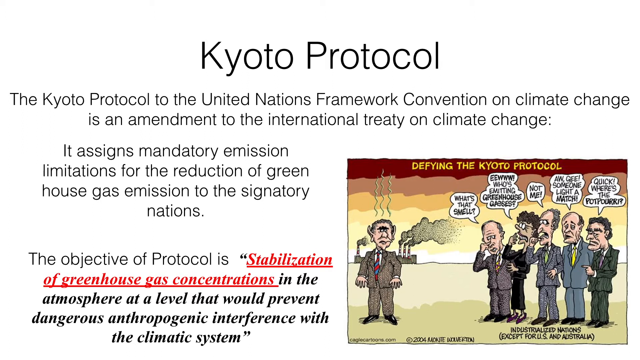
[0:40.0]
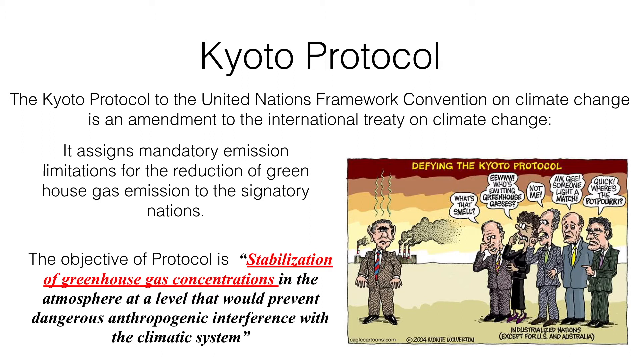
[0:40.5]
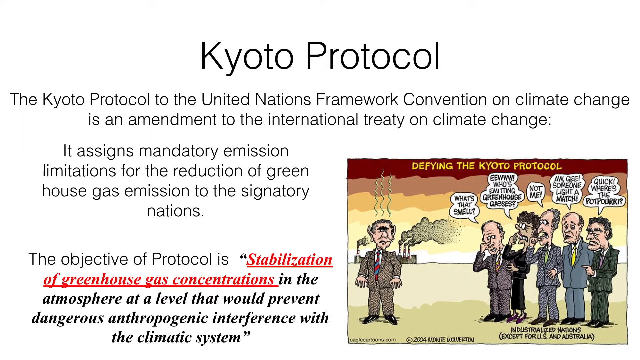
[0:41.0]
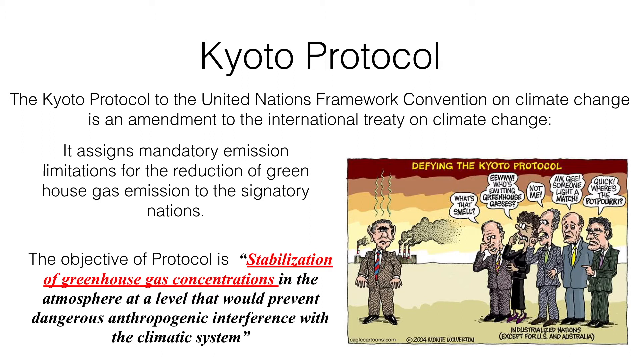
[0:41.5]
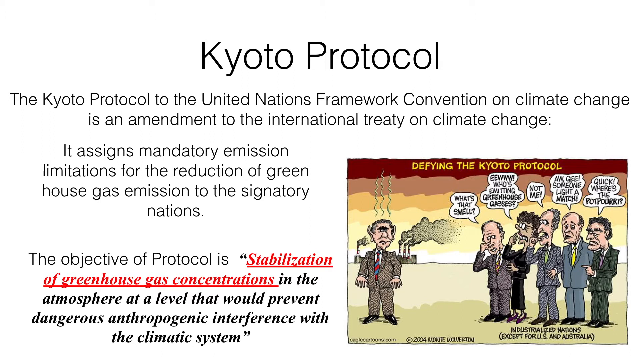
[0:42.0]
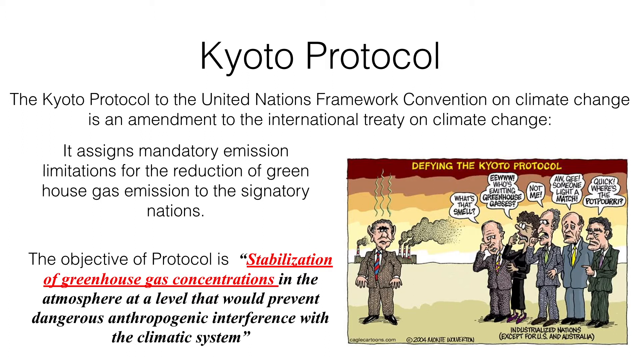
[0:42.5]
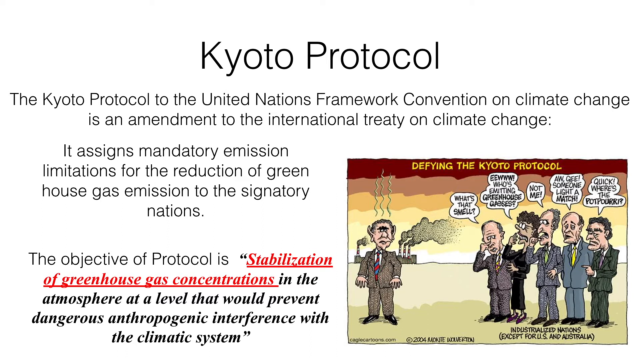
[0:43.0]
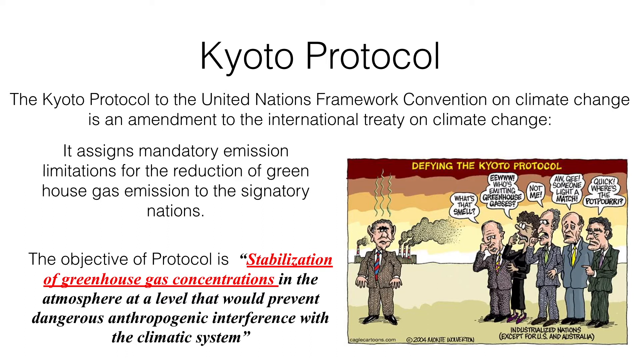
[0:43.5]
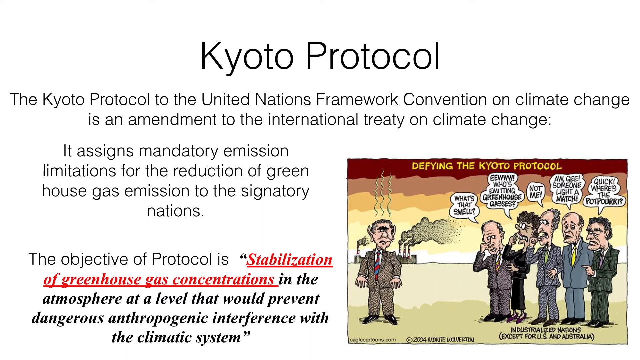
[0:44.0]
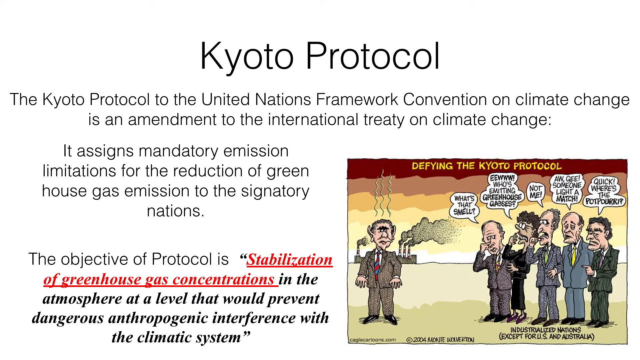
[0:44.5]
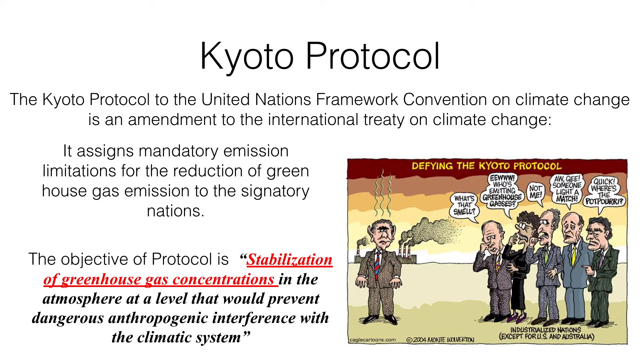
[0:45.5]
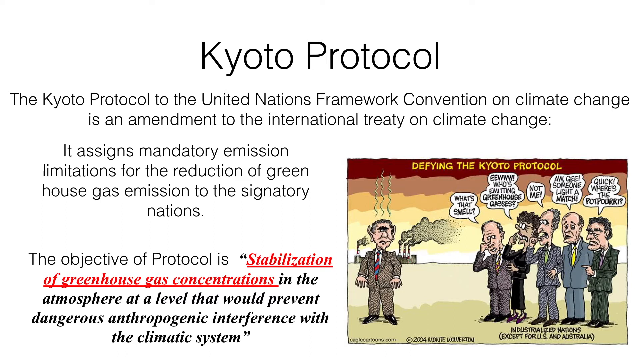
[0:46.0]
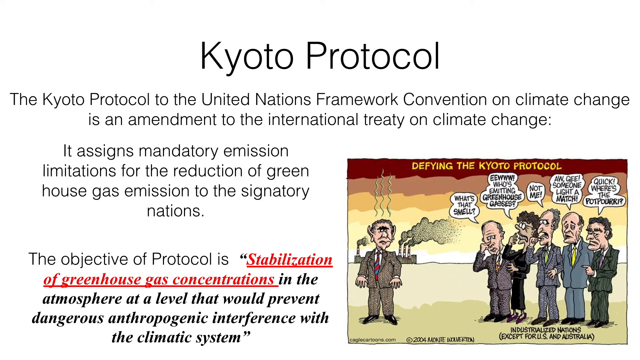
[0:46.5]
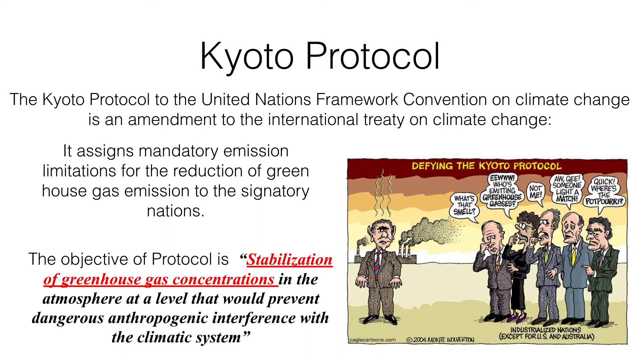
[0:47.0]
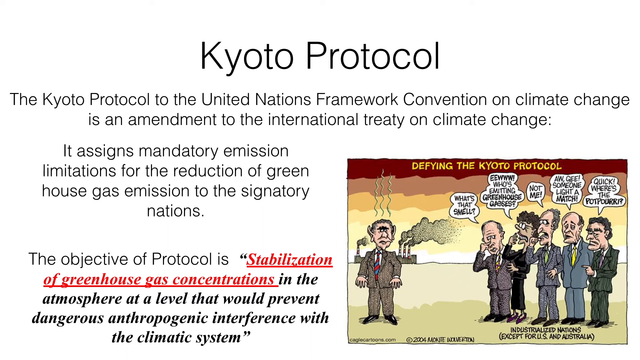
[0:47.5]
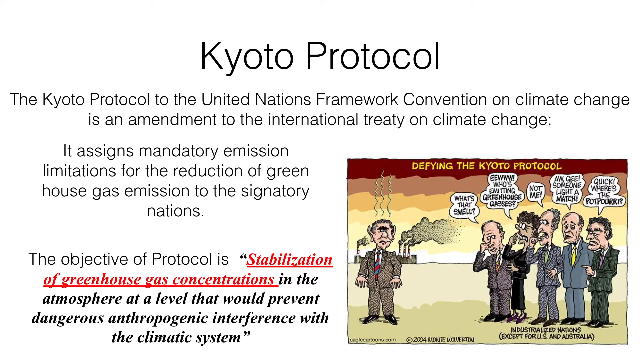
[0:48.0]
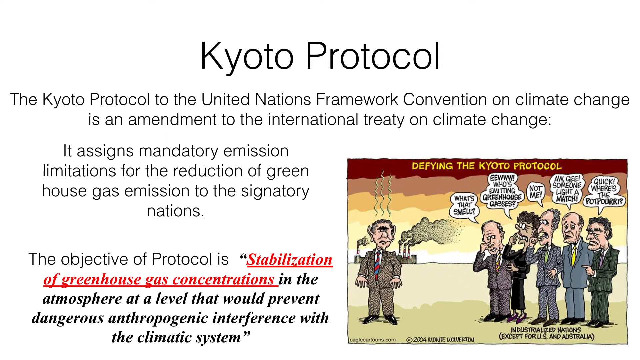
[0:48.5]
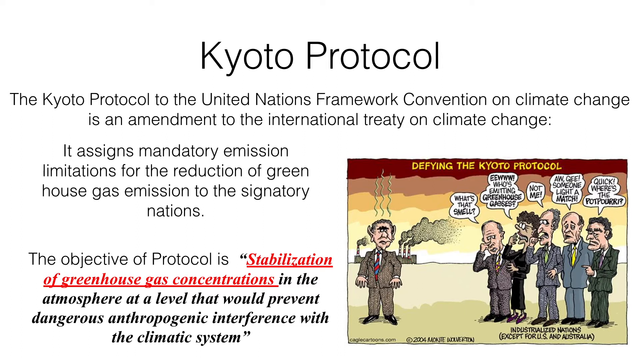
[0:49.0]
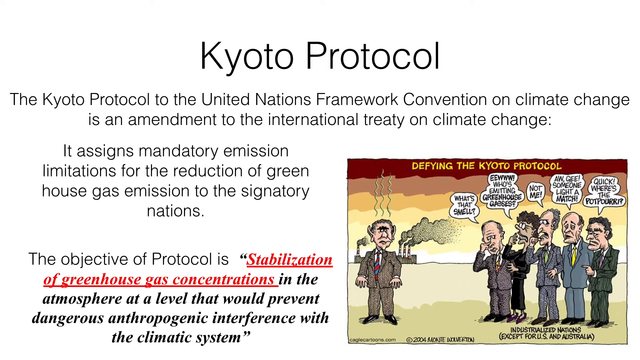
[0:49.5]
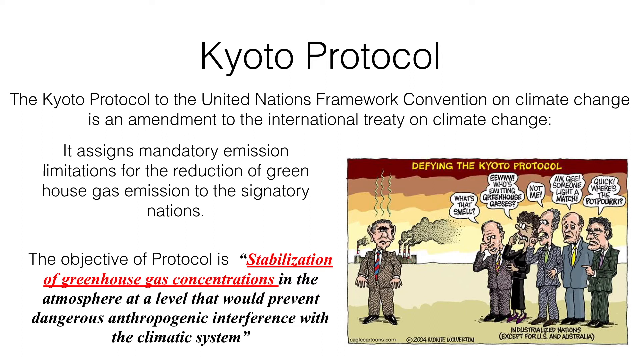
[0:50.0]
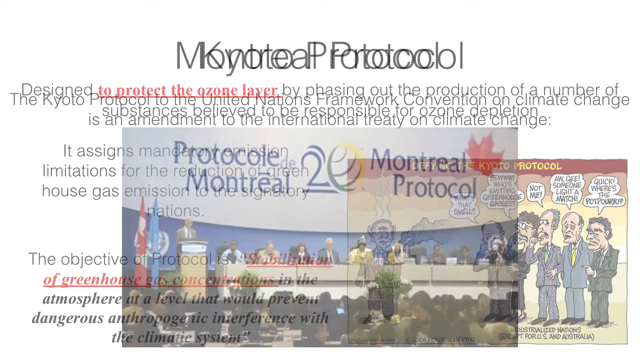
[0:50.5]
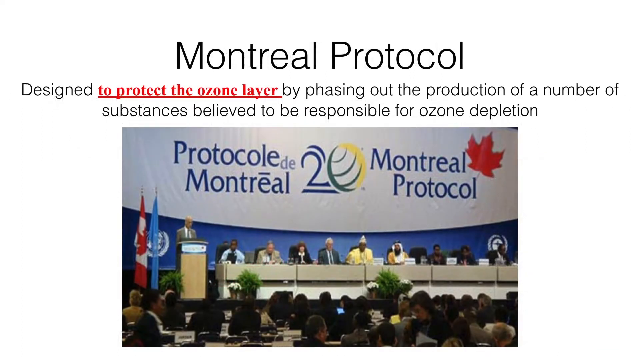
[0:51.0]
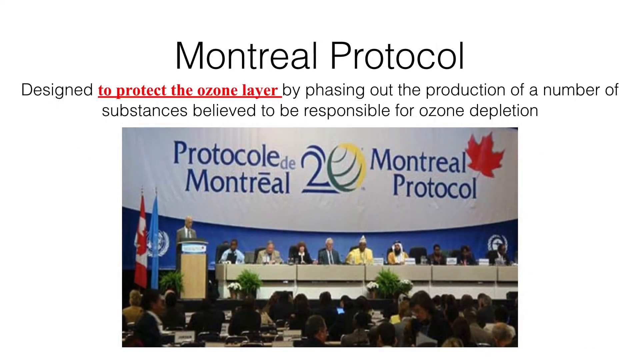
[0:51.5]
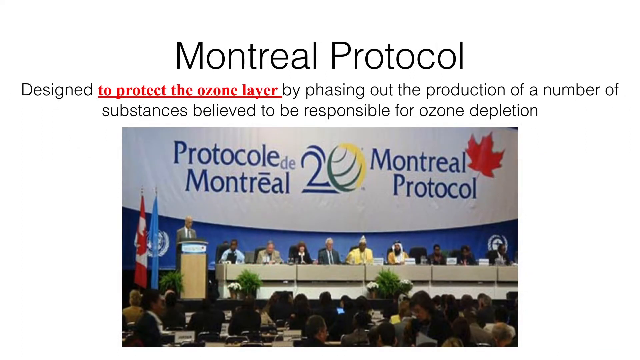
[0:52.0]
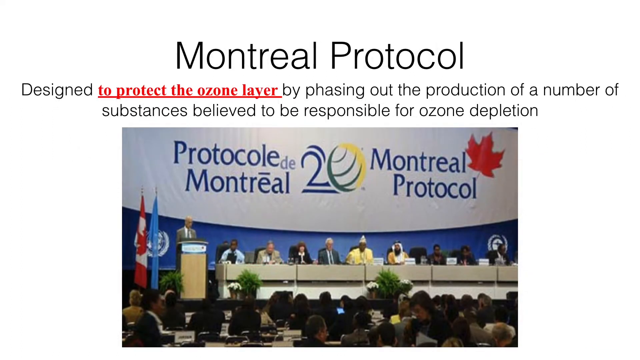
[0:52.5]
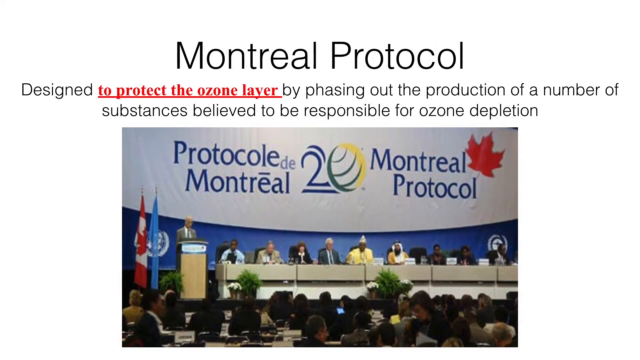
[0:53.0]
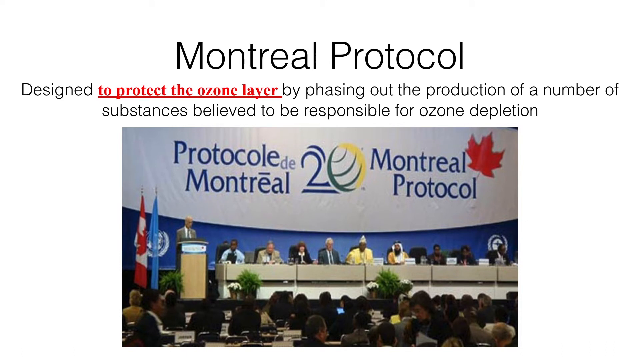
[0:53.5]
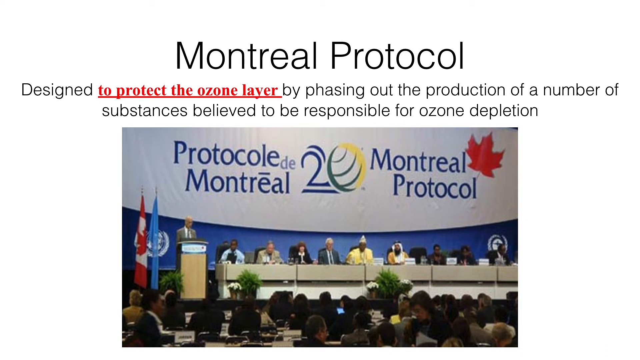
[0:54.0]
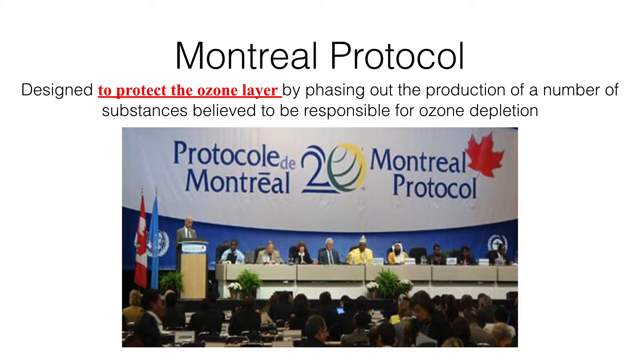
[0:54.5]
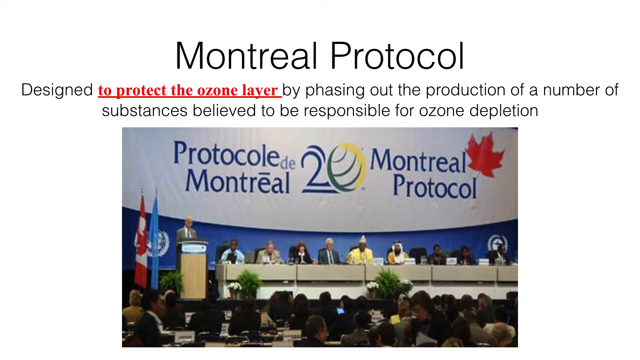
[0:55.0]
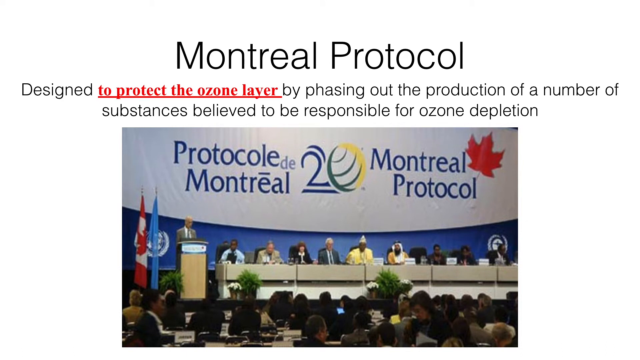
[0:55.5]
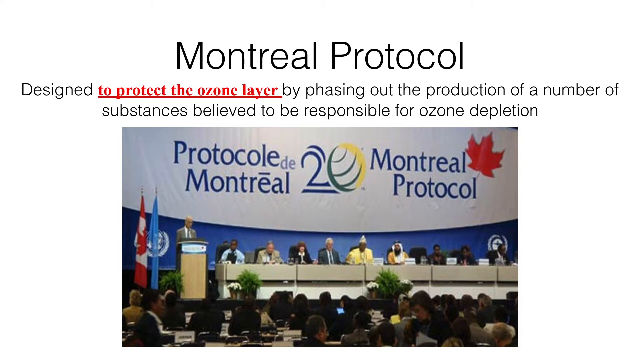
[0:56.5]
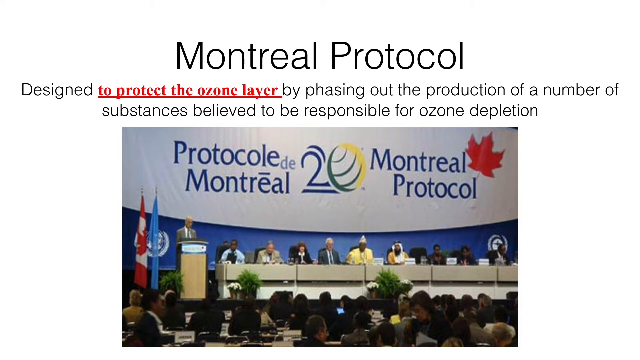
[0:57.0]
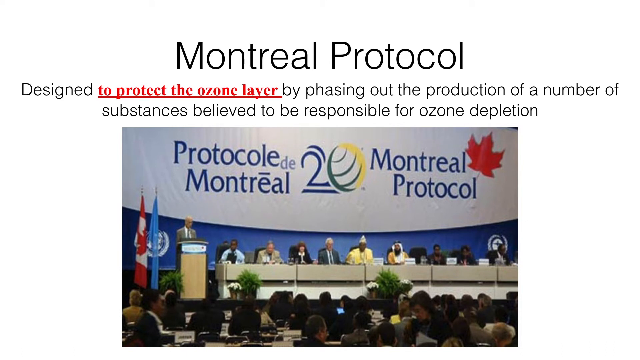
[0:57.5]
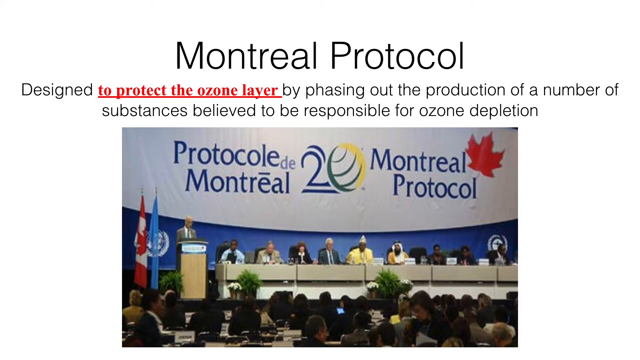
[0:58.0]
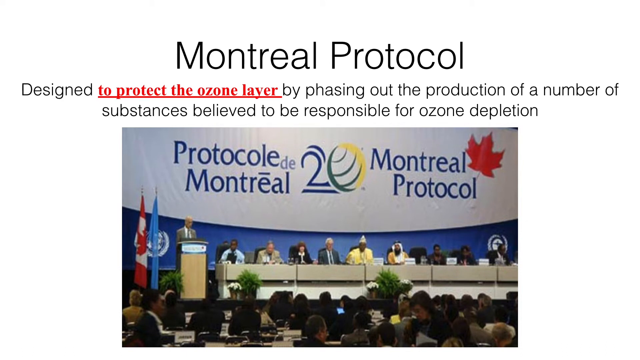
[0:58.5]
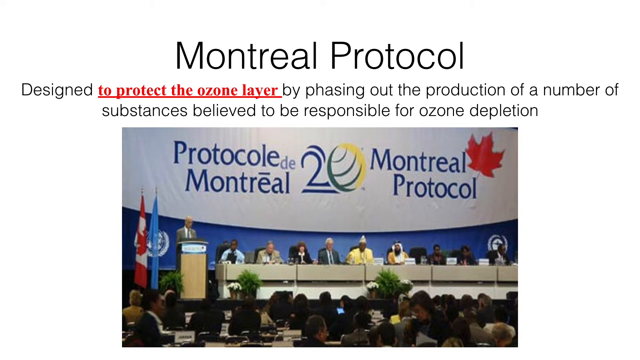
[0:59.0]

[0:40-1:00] A series of what look like pages from a website or a video about various elements of environmental activism continues. The first page has a header that says "Kyoto Protocol," and the text on the left describes the Kyoto Protocol as an amendment to the International Treaty on Climate Change that assigns mandatory emission limitations for the reduction of greenhouse gases. In the lower right of the page, a political cartoon shows someone standing in front of a factory that is belching pollution. On the right side, five people are lined up, whom the caption says represent industrialized nations except the US and Australia. They all have text bubbles above their heads indicating that they are ignoring the pollution coming from the factory. The screen then changes to another page with a header that says "Montreal Protocol." Text below it says "Designed to protect the ozone layer by phasing out the production of a number of substances believed to be responsible for ozone depletion." Below that is a photograph of what looks like a panel or conference, with people sitting behind desks on a stage.